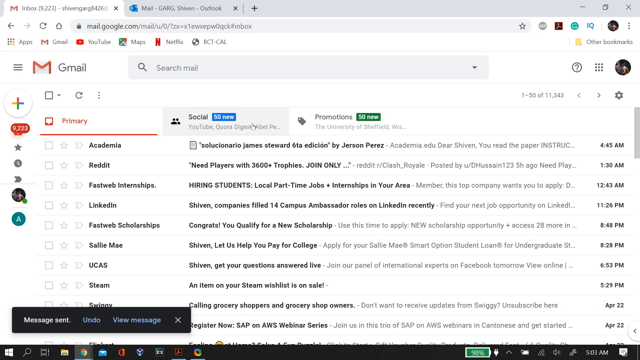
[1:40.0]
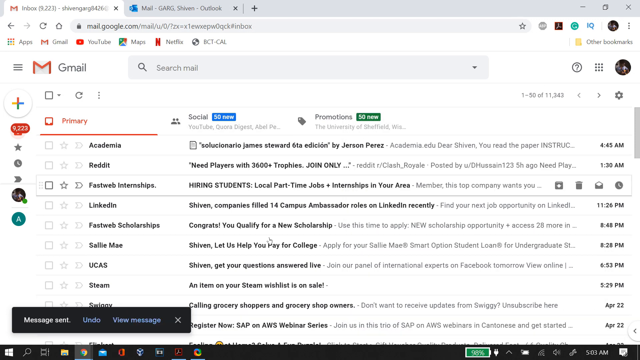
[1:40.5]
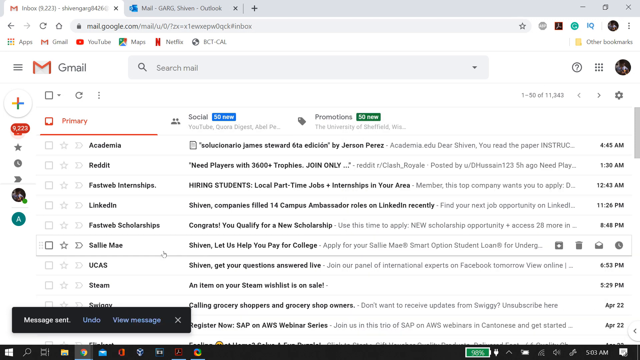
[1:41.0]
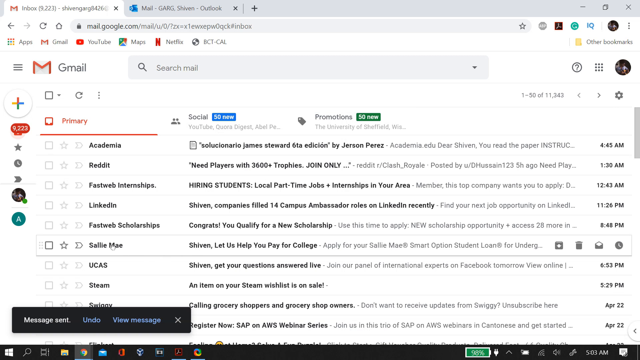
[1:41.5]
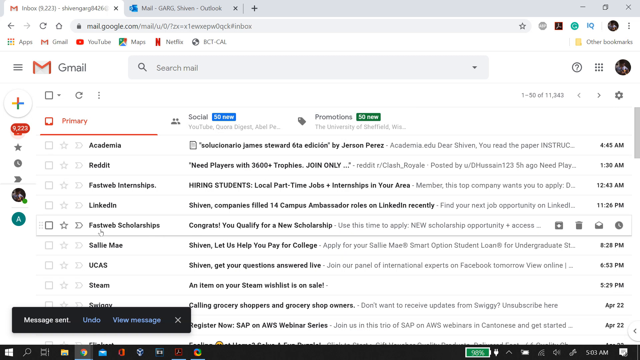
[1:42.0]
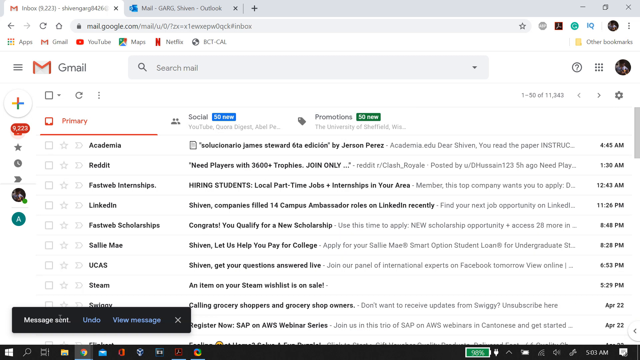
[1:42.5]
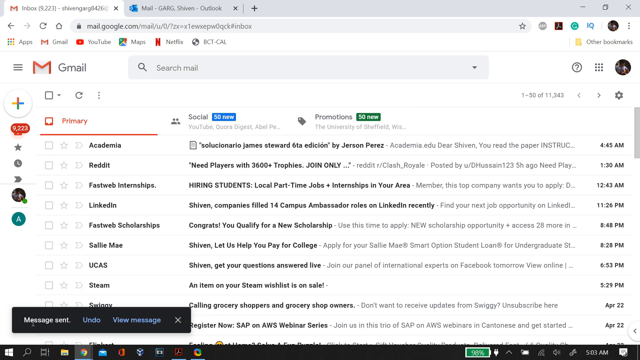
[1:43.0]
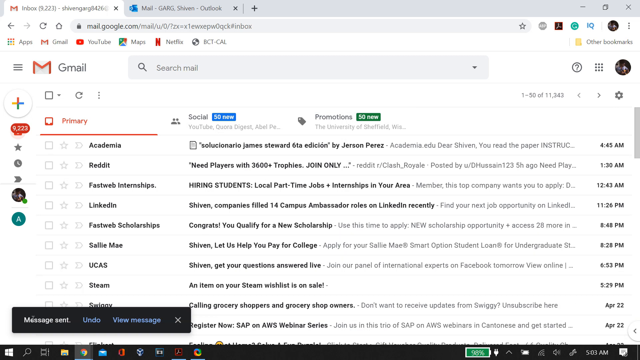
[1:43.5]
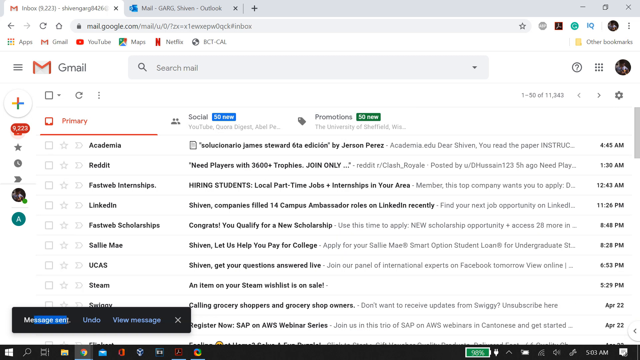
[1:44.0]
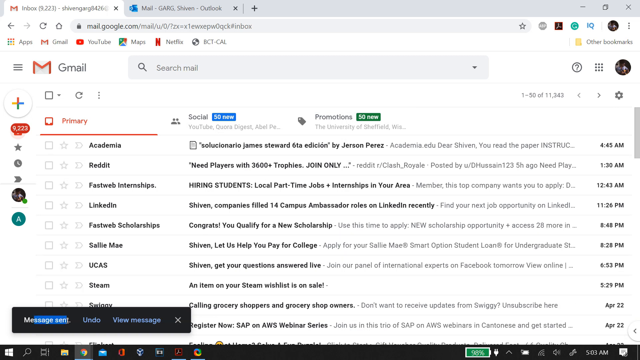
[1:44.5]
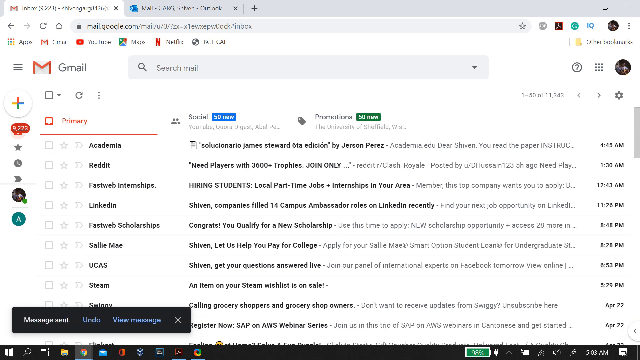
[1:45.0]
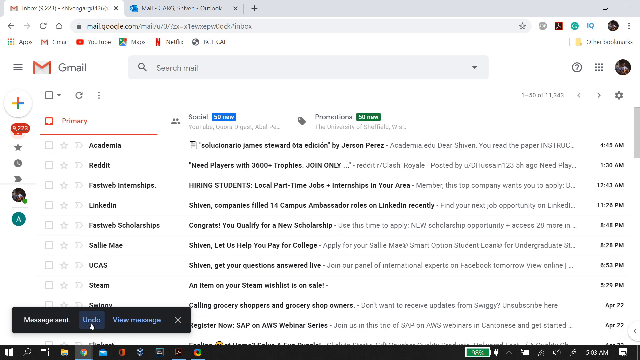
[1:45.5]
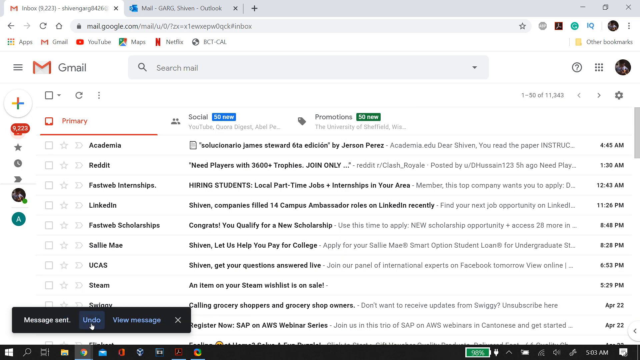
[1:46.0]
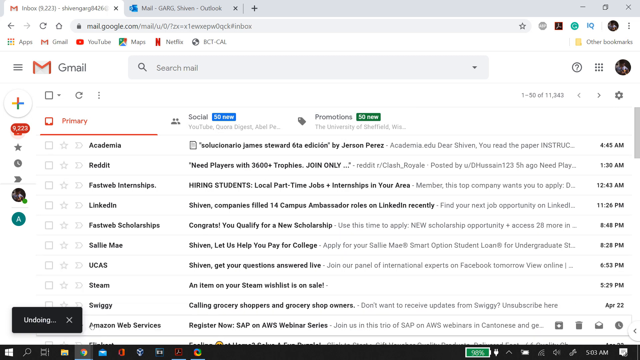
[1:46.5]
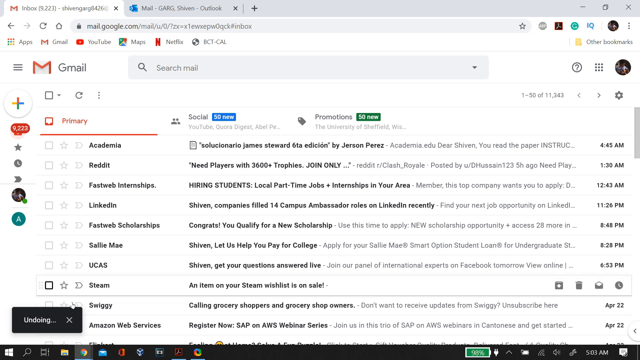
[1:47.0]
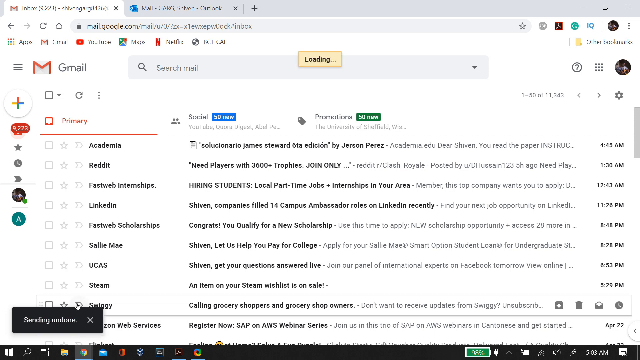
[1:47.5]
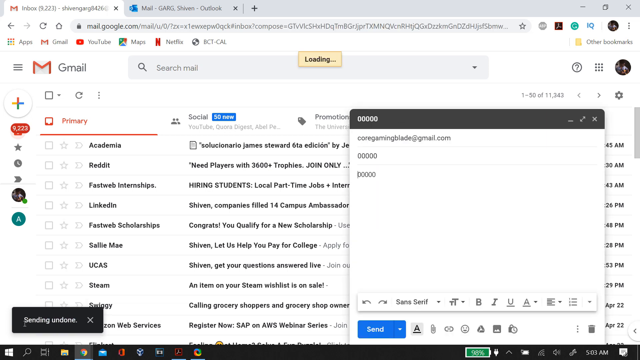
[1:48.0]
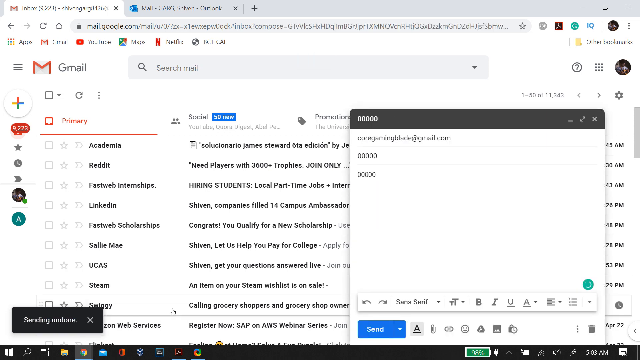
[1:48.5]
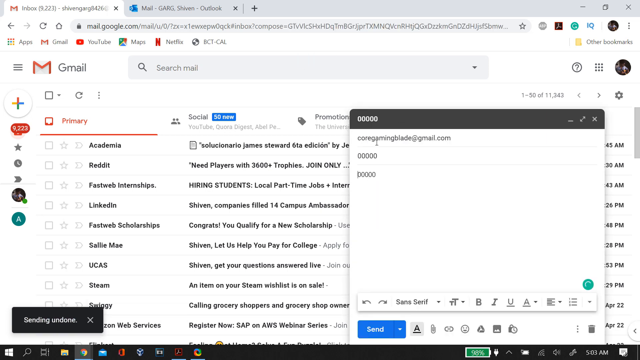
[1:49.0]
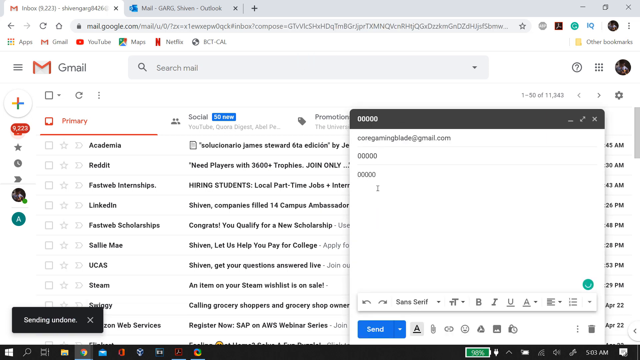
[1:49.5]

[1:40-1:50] The user continues exploring the inbox. It seems that a message was sent, and at that moment a notification appears at the lower left: a black bar that says "message sent" with three options to the right, one that says "undo", another that says "see message", and a cross icon to close the notification. The user clicks undo.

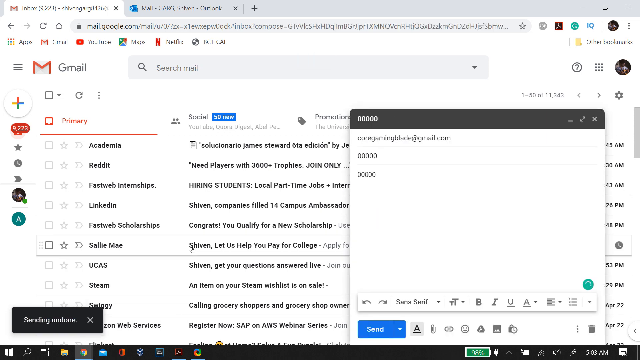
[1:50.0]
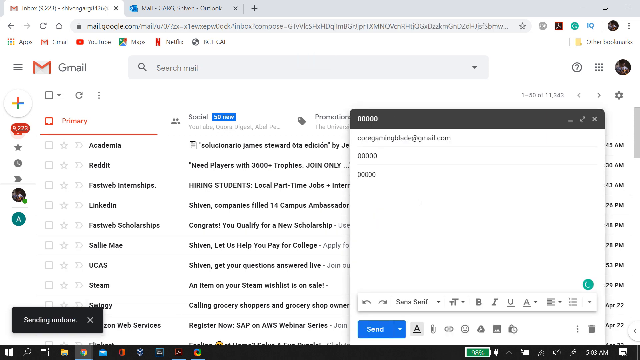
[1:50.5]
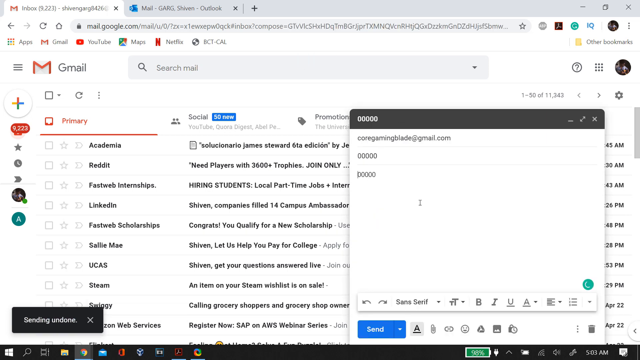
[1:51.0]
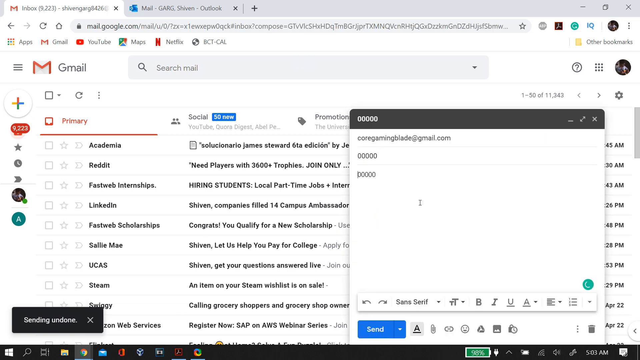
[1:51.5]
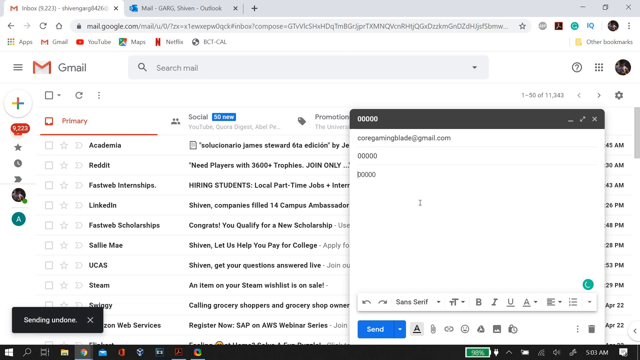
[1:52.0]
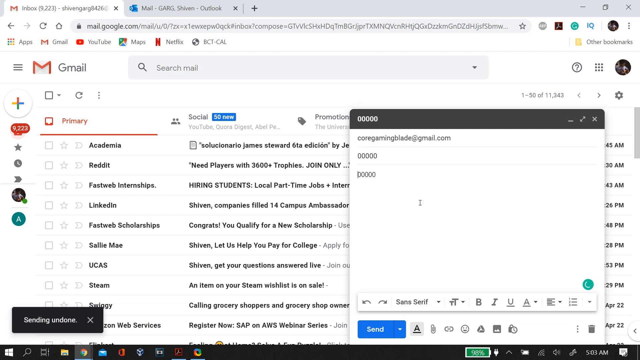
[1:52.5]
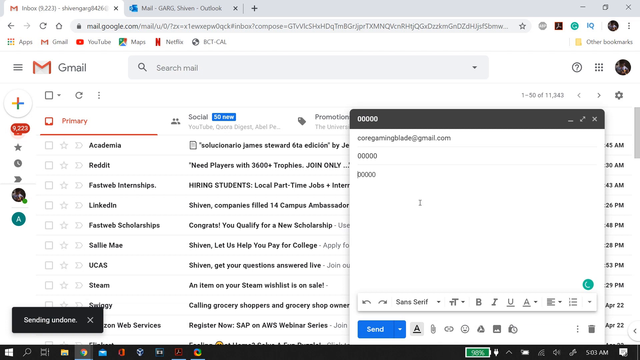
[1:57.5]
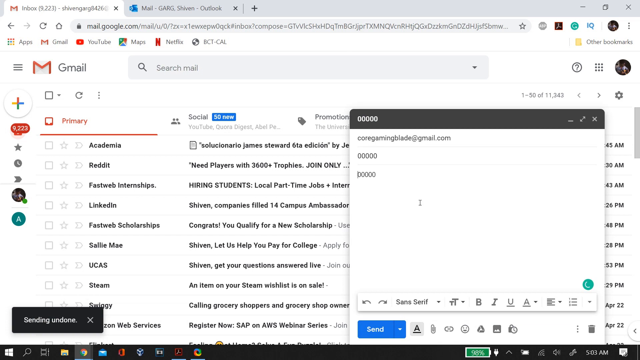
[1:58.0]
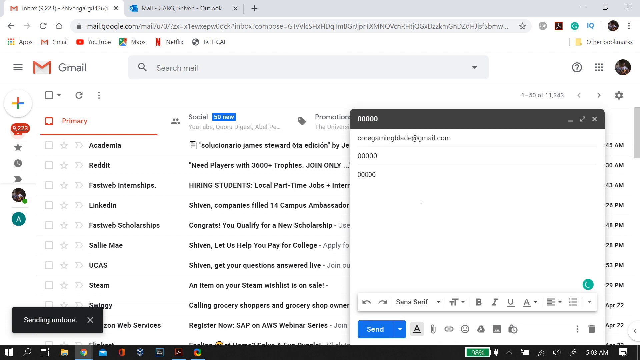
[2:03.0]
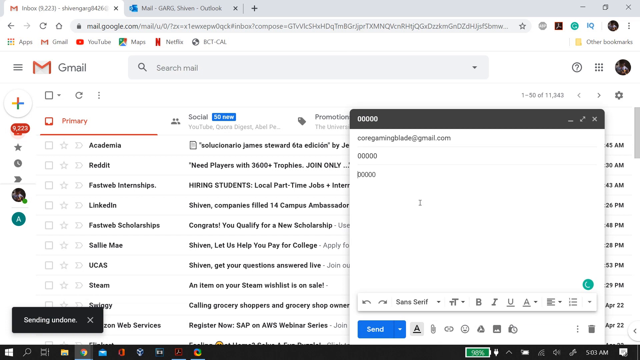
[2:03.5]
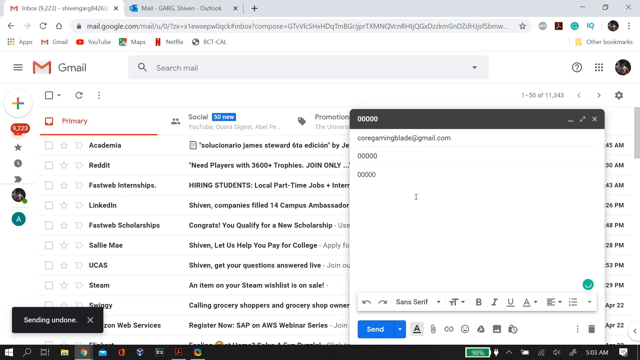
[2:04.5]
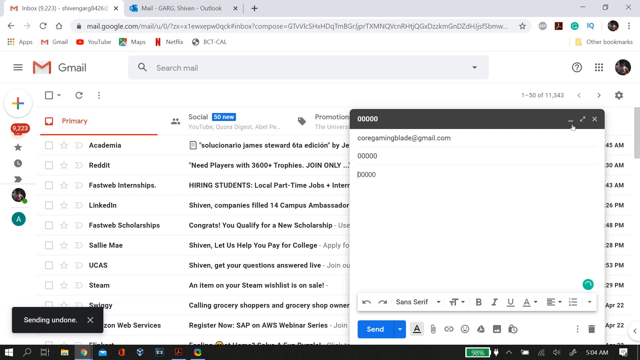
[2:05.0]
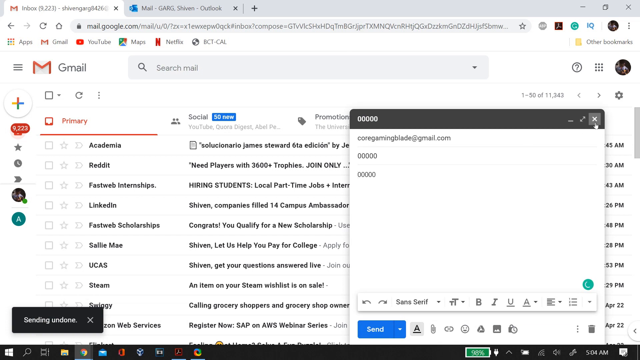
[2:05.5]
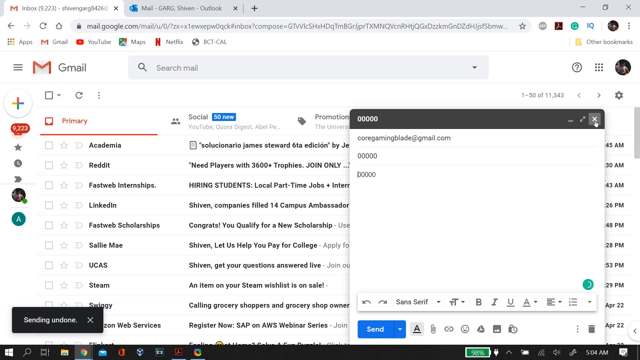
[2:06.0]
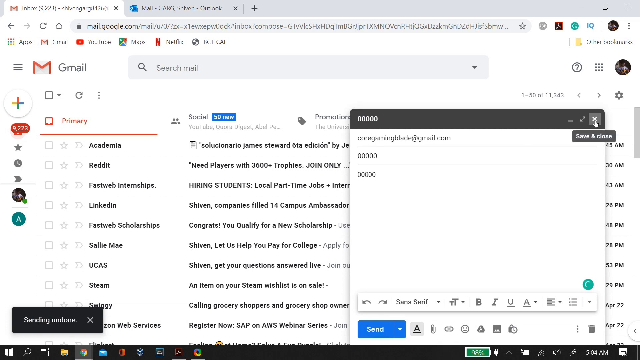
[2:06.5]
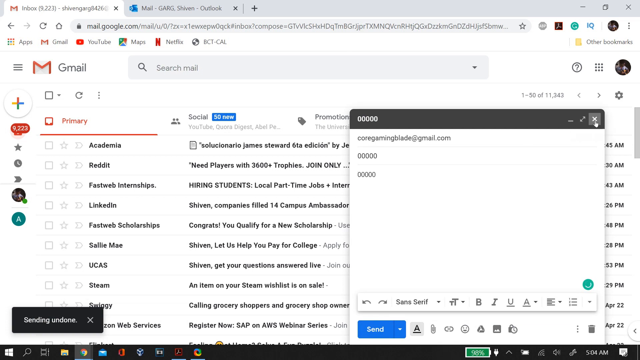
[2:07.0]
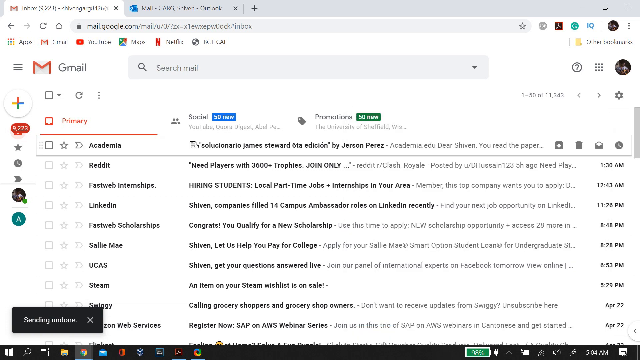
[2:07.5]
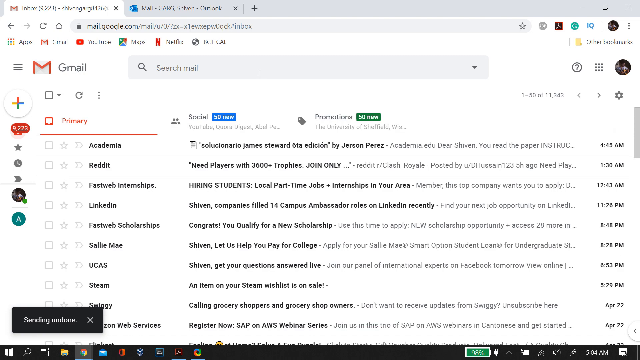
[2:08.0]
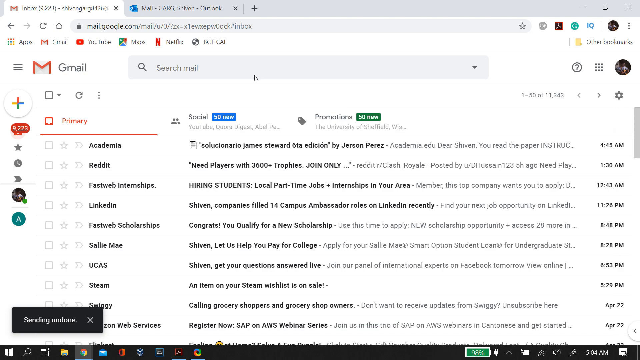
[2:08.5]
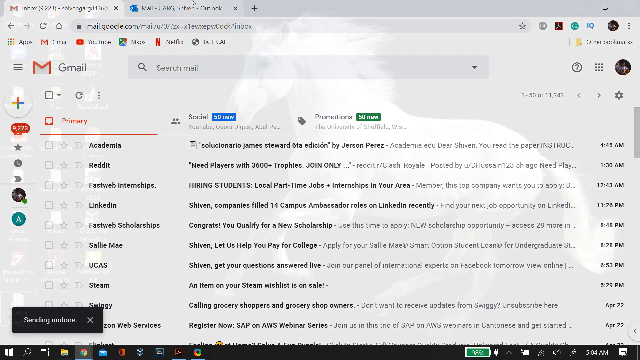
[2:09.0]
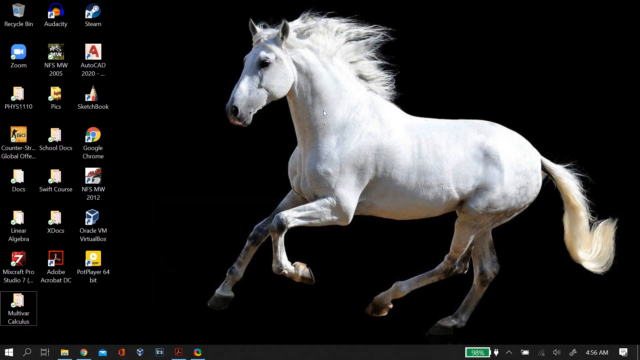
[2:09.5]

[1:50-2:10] The user has opened the message that was written. The recipient's email is CoreGamingBlade@gmail.com, the title of the message is five zeros, and the content has nothing important written in it. The user closes the message and minimizes the Google Chrome window with the Gmail account open in it, returning to the desktop background with the white horse.